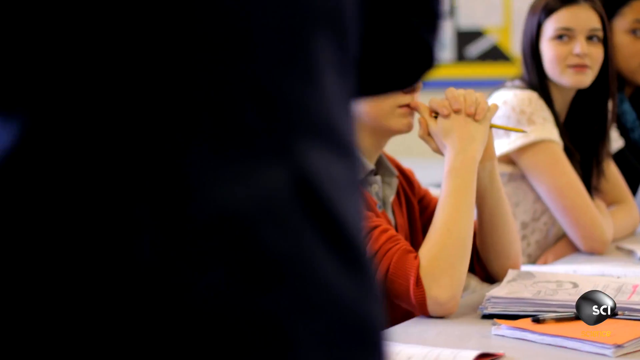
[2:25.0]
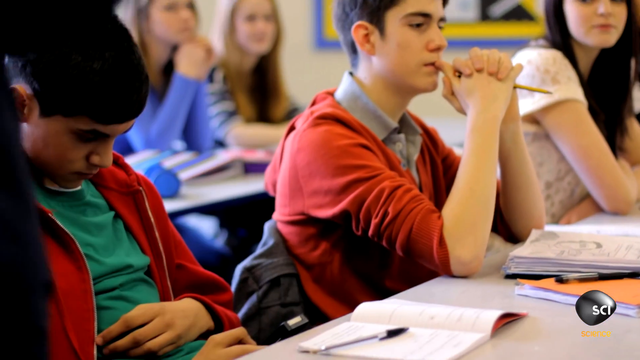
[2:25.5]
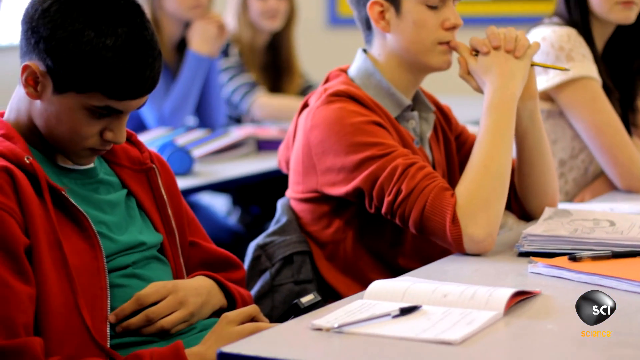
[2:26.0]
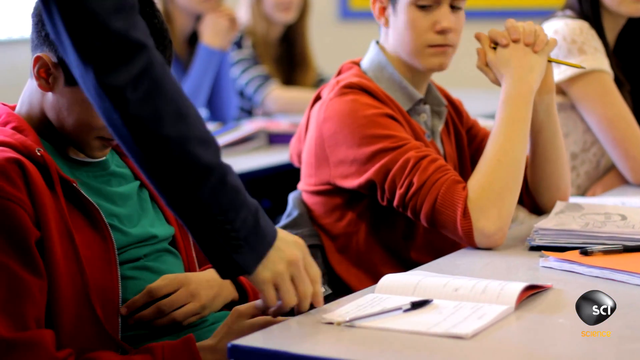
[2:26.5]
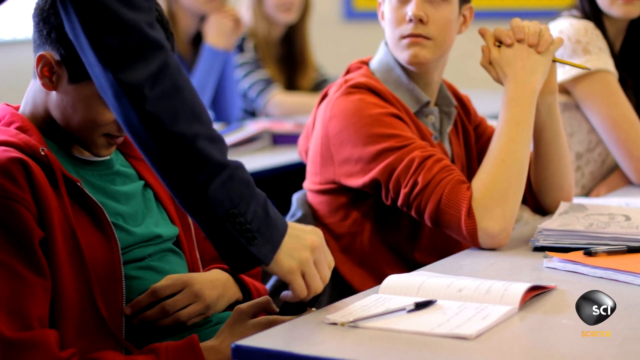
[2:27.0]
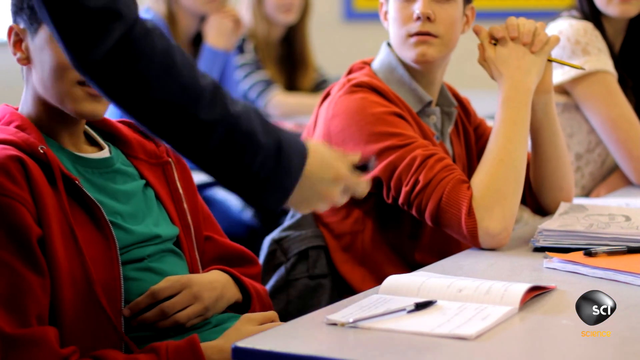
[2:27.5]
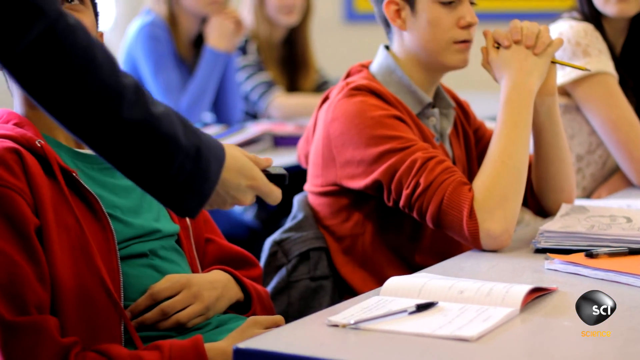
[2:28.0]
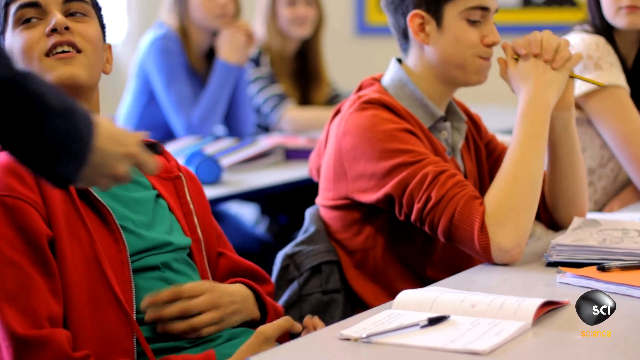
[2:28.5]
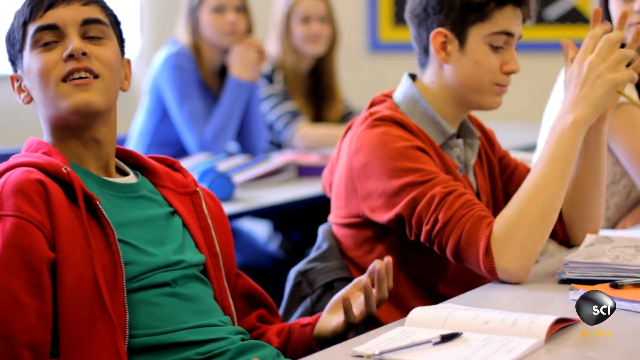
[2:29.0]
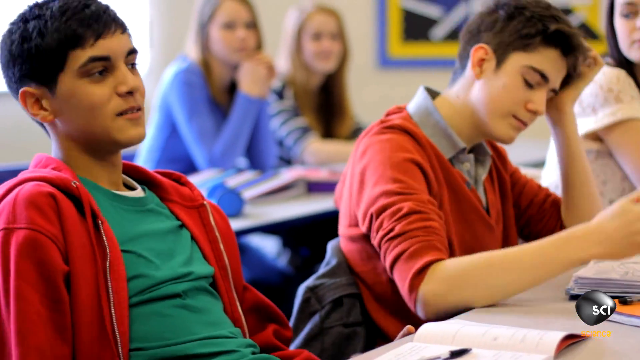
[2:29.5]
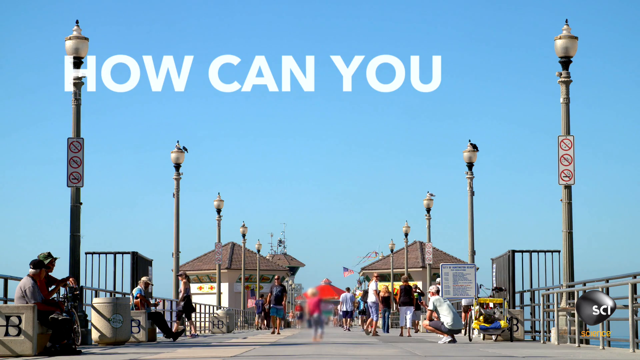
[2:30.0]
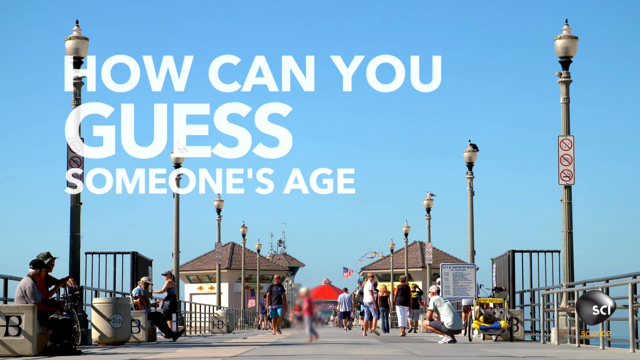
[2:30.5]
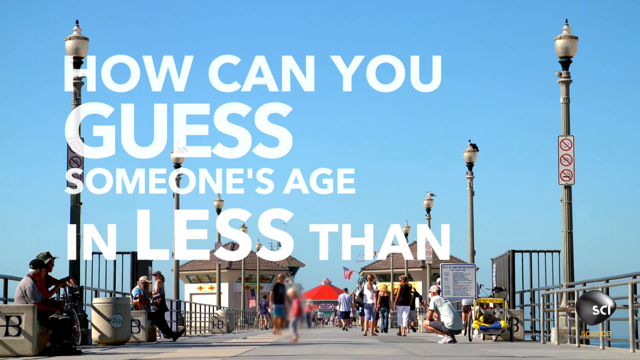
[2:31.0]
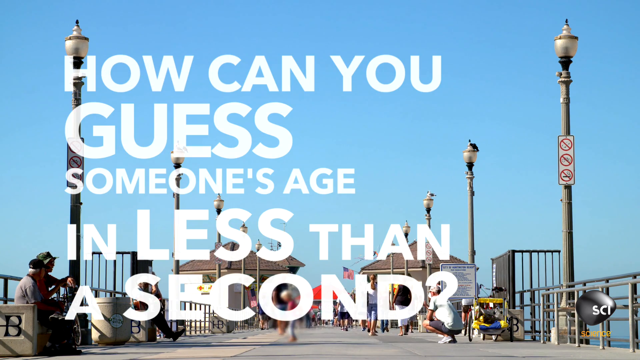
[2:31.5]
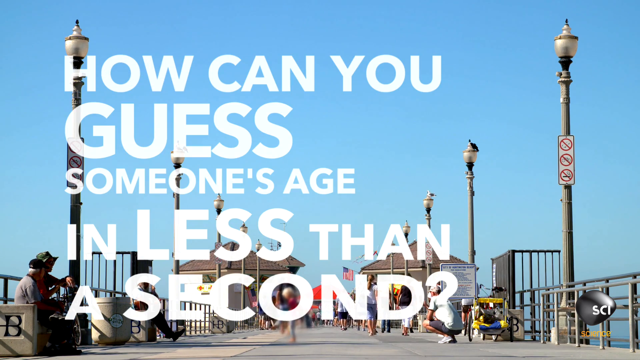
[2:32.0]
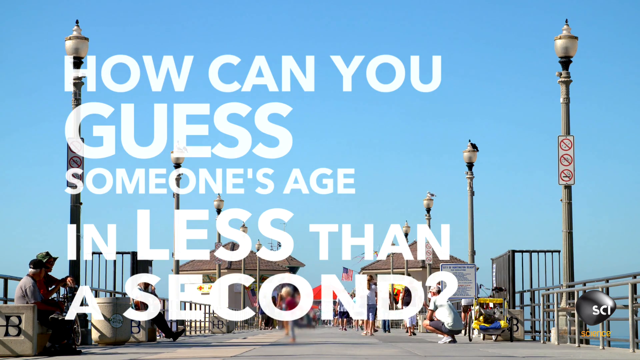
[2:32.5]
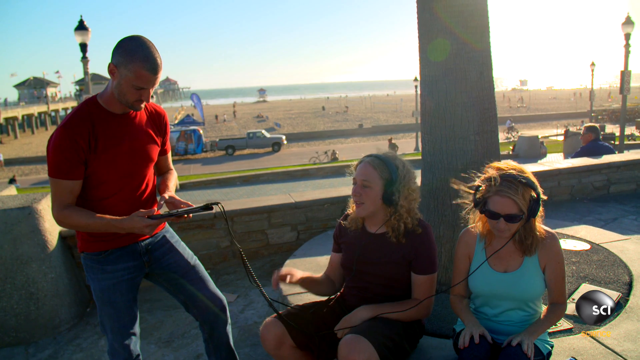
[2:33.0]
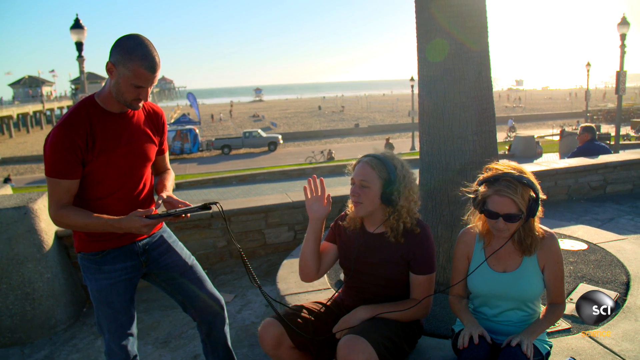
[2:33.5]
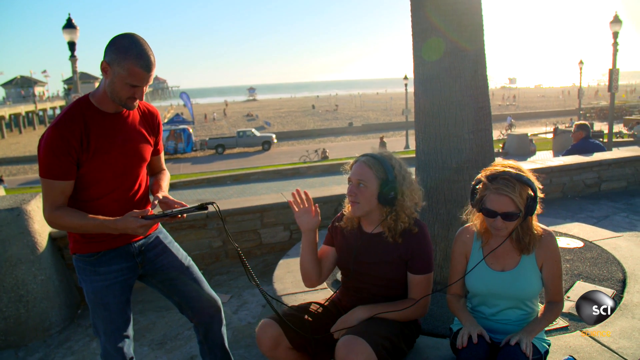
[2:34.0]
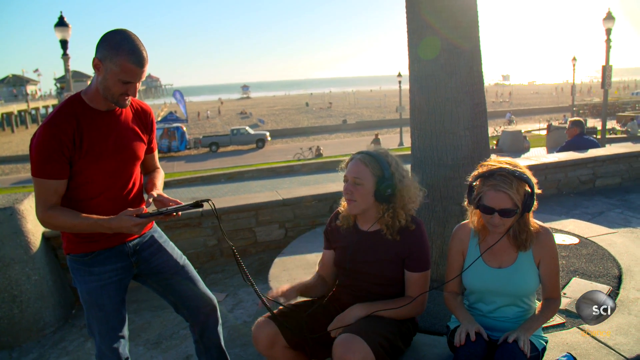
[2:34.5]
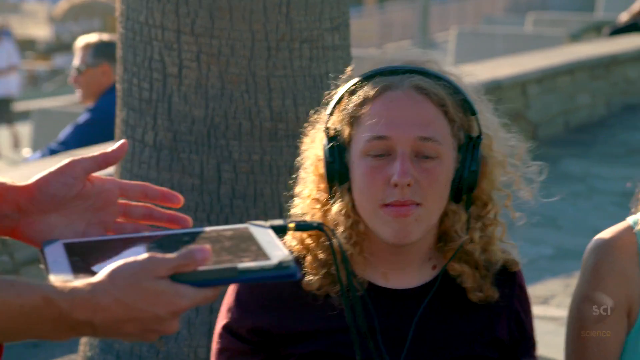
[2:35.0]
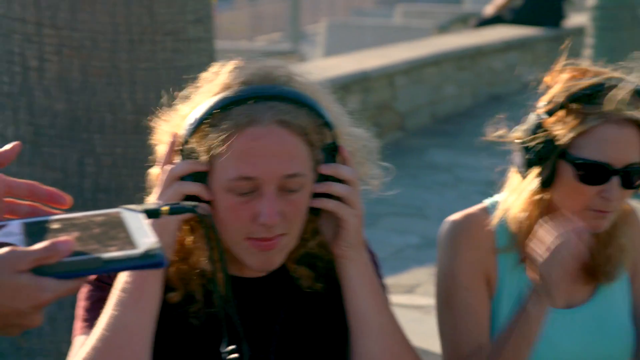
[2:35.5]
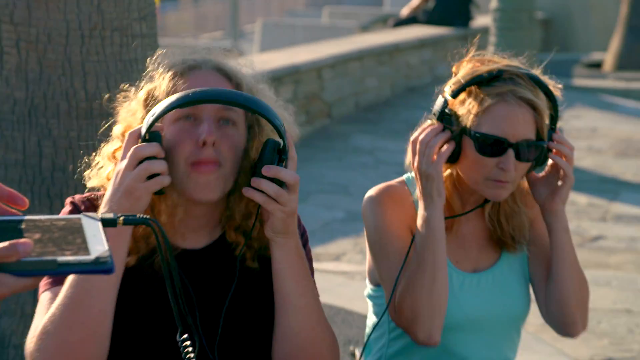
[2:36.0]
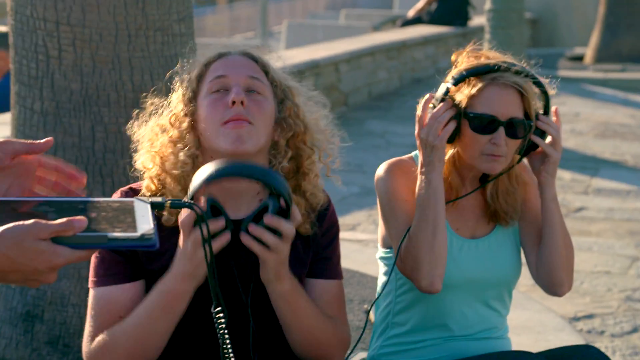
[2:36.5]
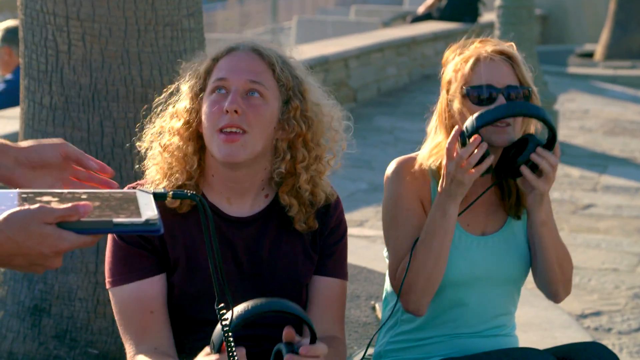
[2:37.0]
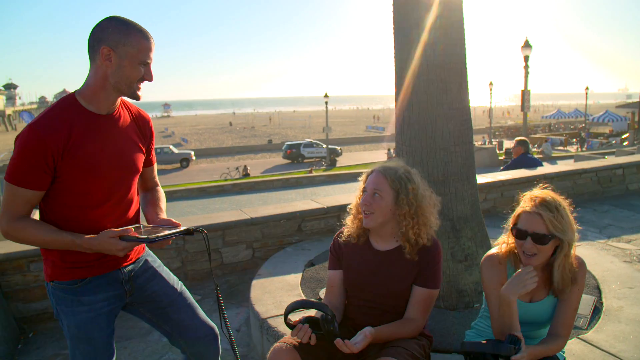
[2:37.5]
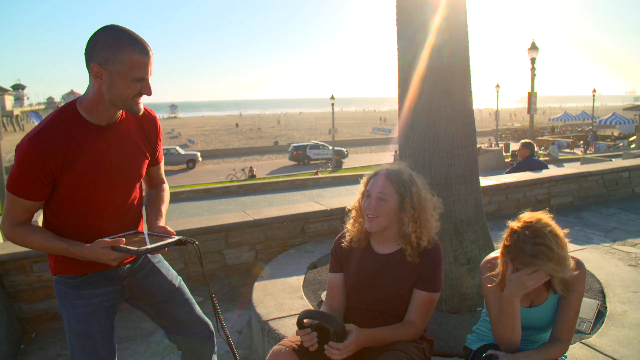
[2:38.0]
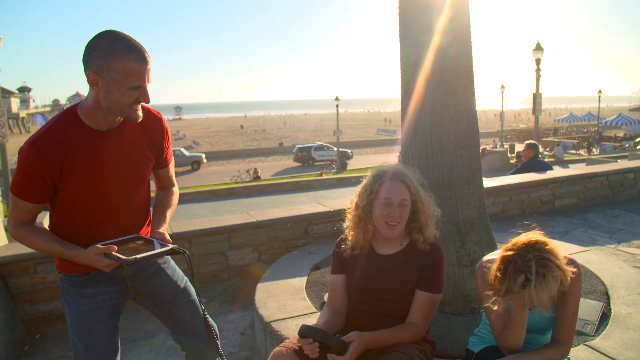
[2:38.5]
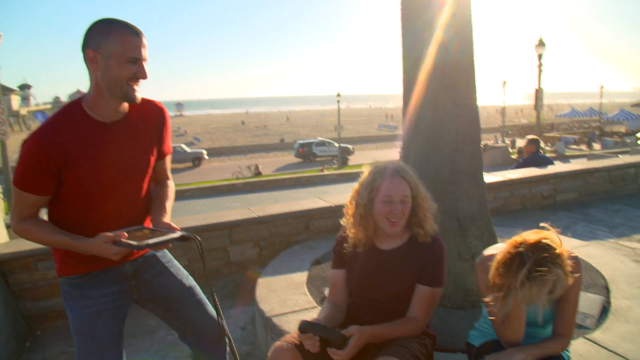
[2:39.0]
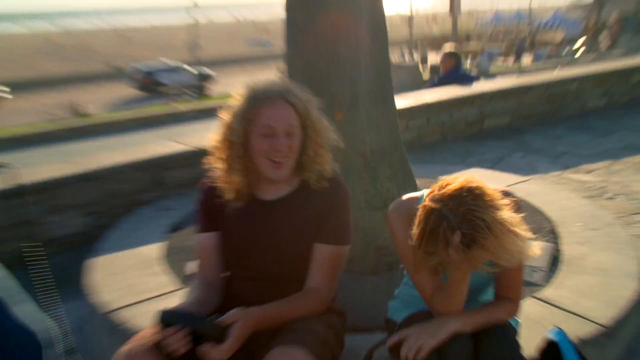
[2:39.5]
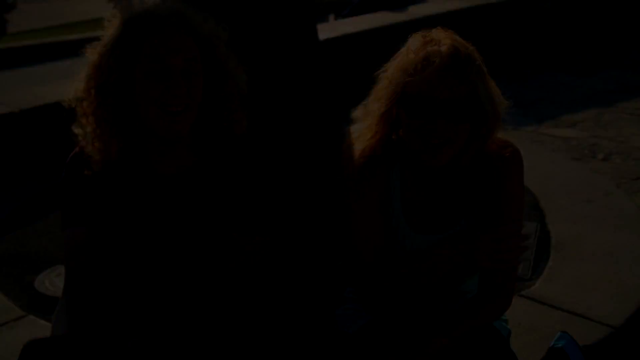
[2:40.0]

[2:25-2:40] Students sit in a class with a book open, and a teacher or somebody walks by and takes a phone away; the boy looks disgruntled. The scene returns to the boardwalk with the question "How can you guess someone's age in less than a second?" The engineer in the red shirt, with headphones and an iPad, is with two women who are sitting down. One raises her hand, they both take the headphones off and look kind of surprised, he says something, and they laugh. One of them facepalms, putting her forehead in her hand and shaking her head as if disappointed.